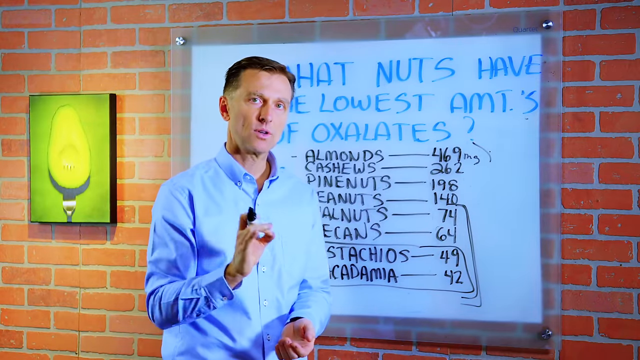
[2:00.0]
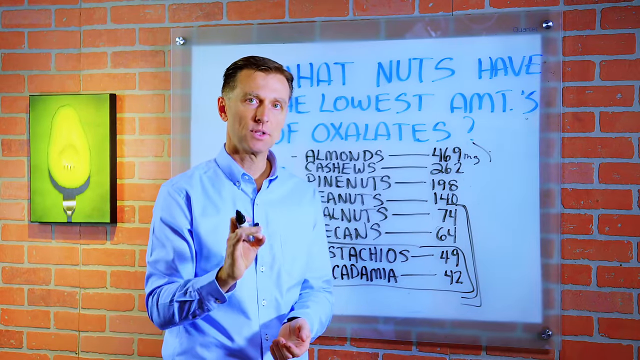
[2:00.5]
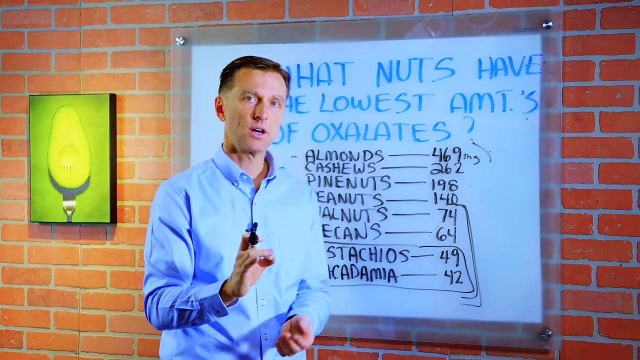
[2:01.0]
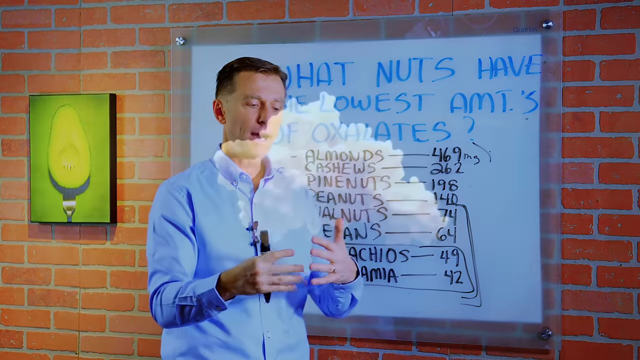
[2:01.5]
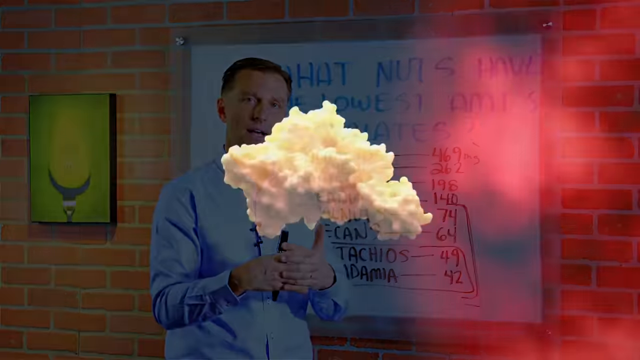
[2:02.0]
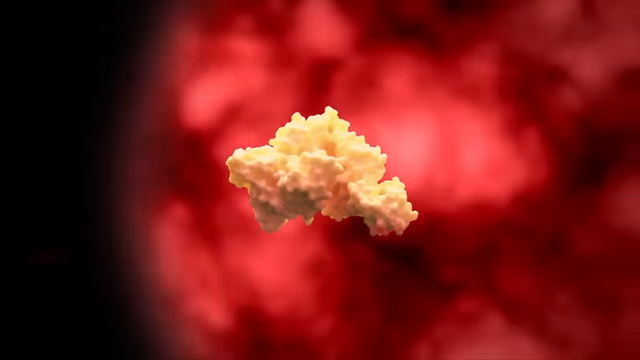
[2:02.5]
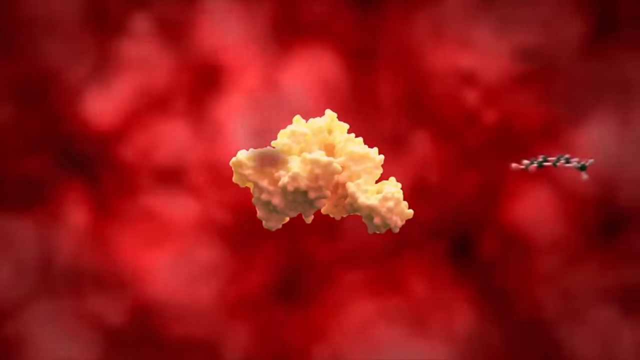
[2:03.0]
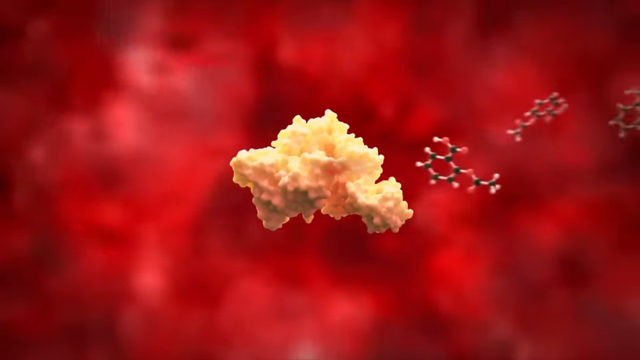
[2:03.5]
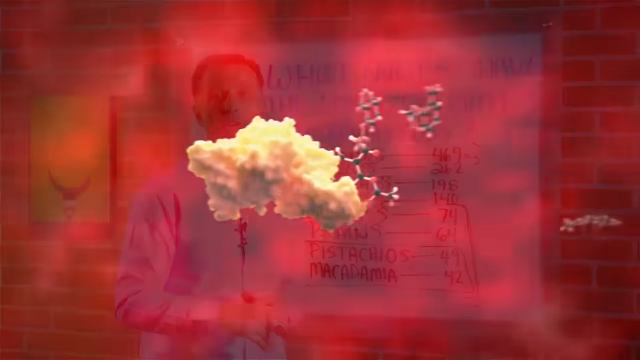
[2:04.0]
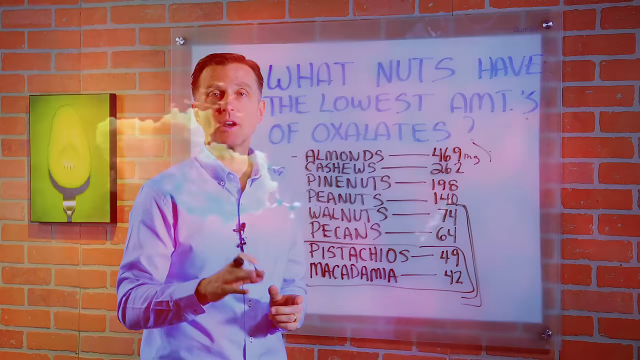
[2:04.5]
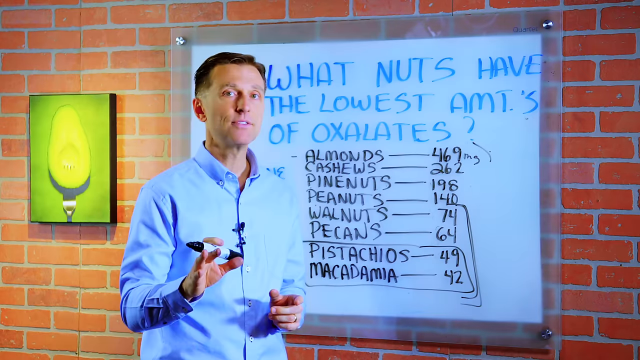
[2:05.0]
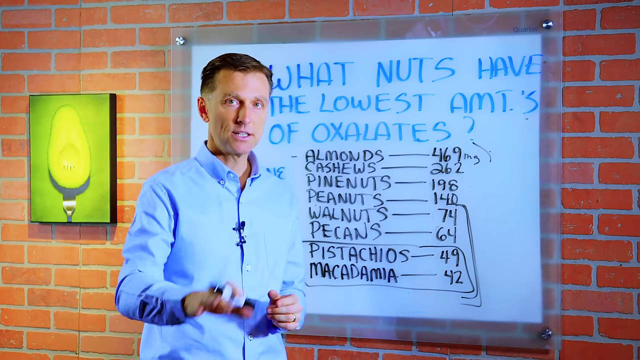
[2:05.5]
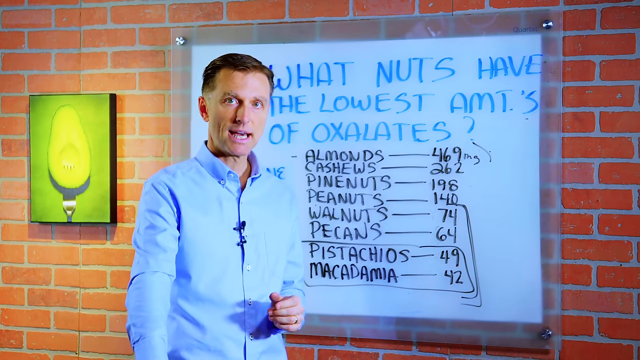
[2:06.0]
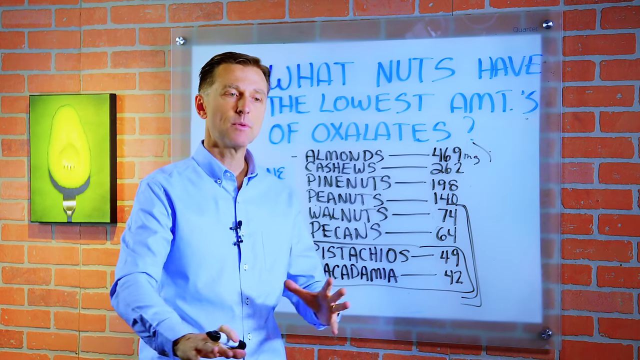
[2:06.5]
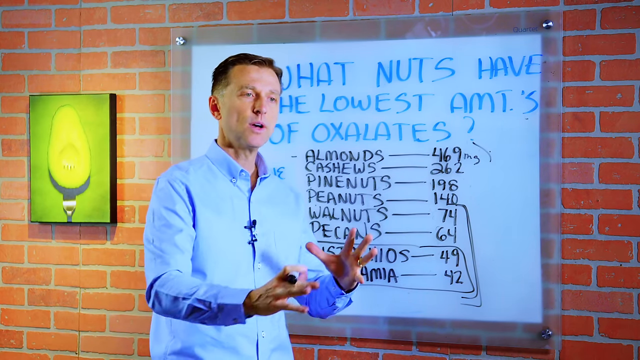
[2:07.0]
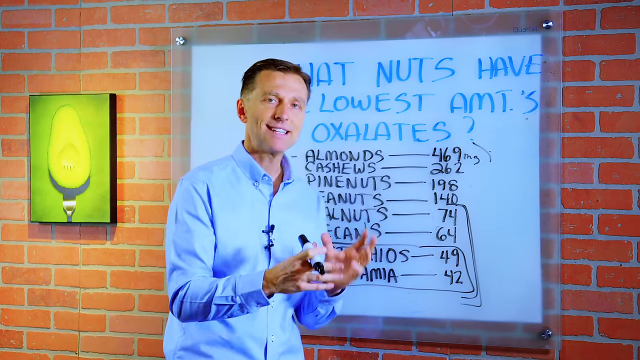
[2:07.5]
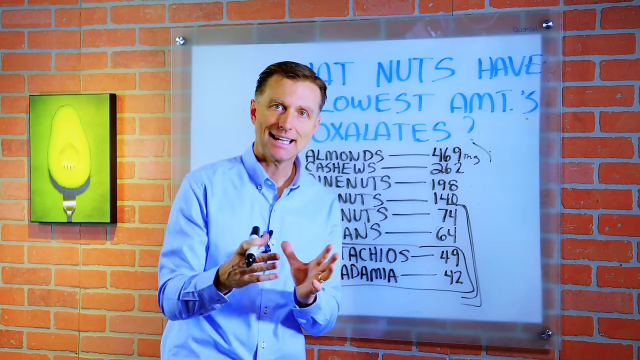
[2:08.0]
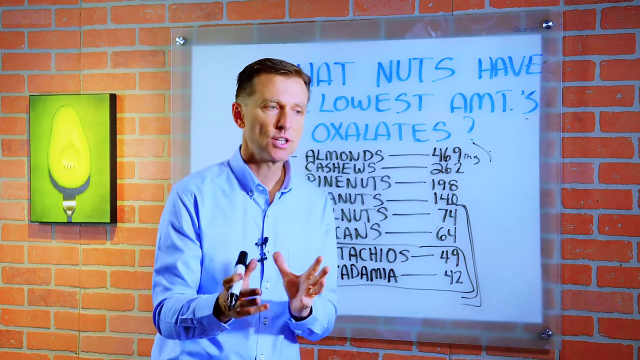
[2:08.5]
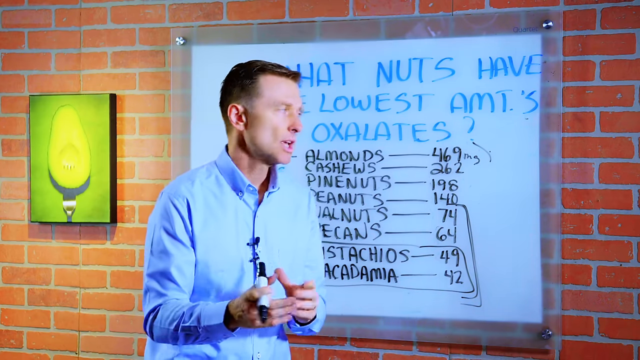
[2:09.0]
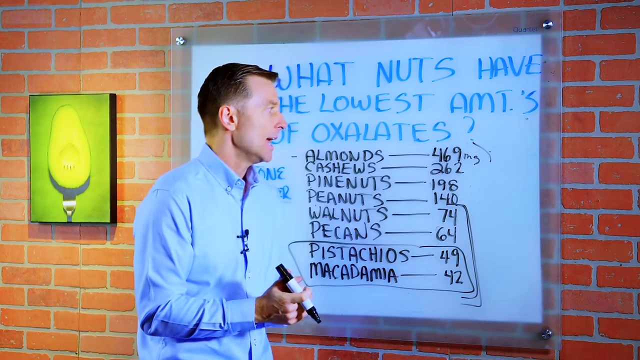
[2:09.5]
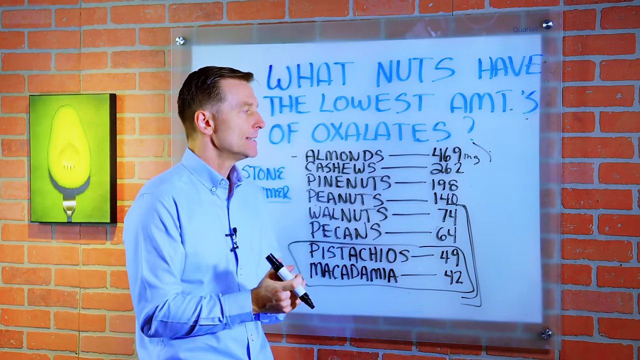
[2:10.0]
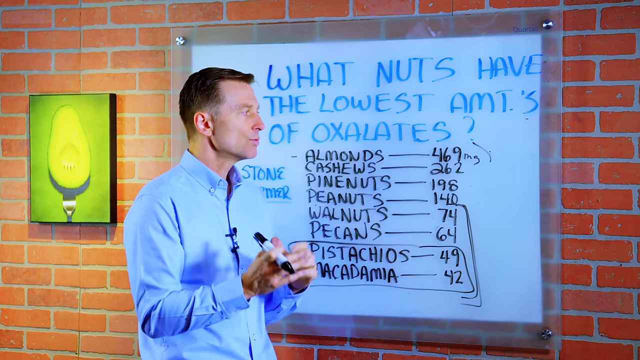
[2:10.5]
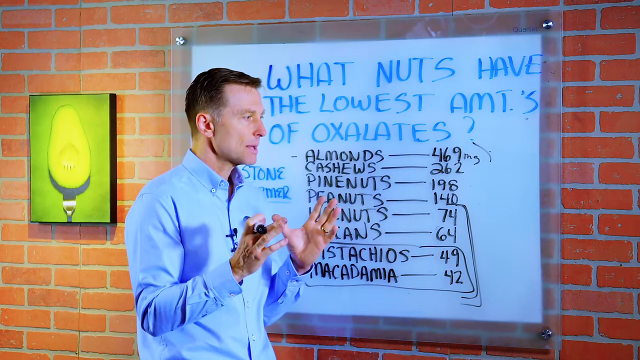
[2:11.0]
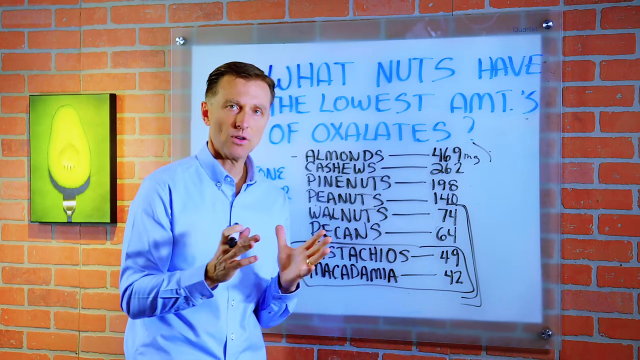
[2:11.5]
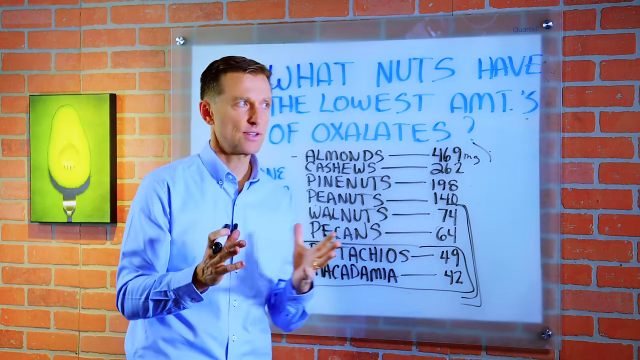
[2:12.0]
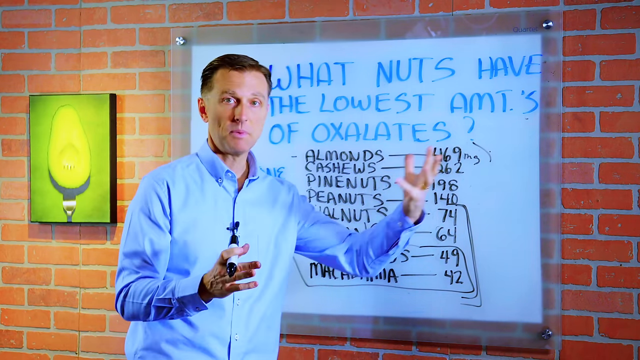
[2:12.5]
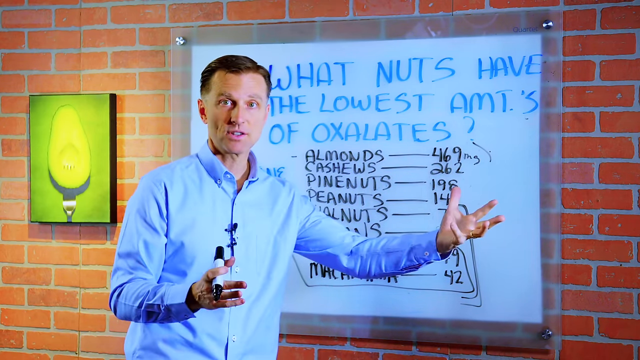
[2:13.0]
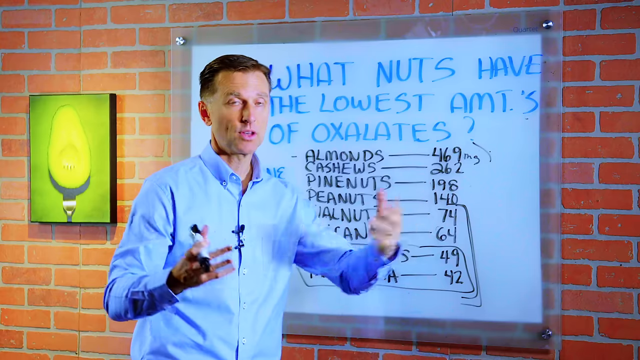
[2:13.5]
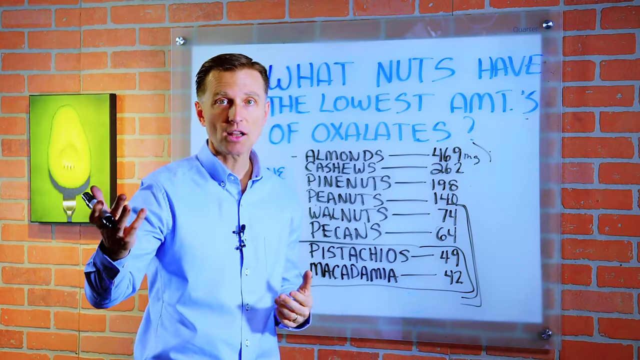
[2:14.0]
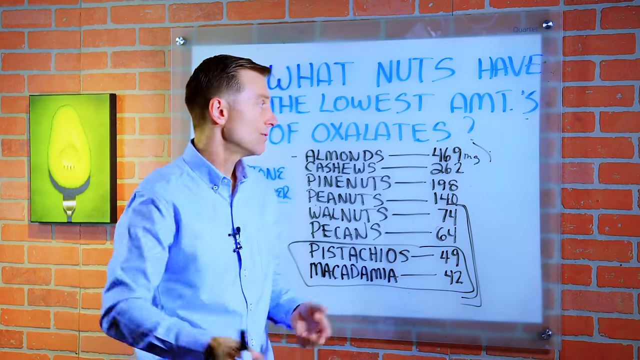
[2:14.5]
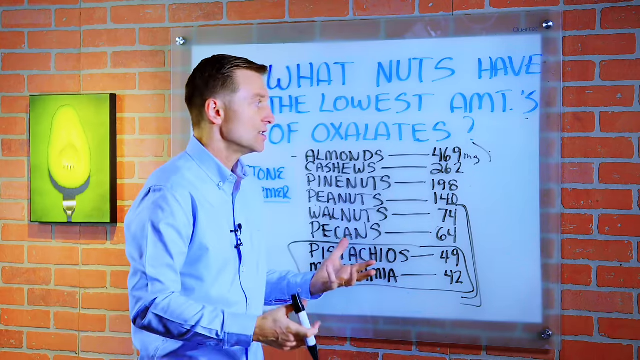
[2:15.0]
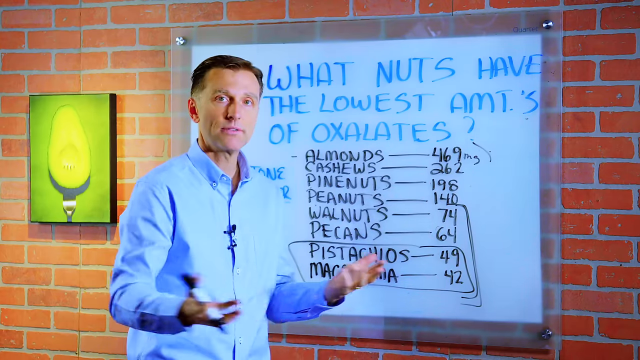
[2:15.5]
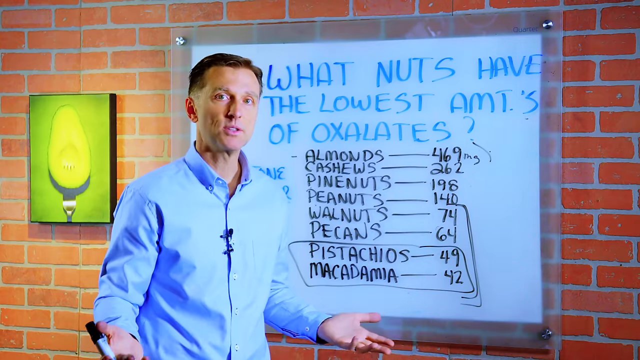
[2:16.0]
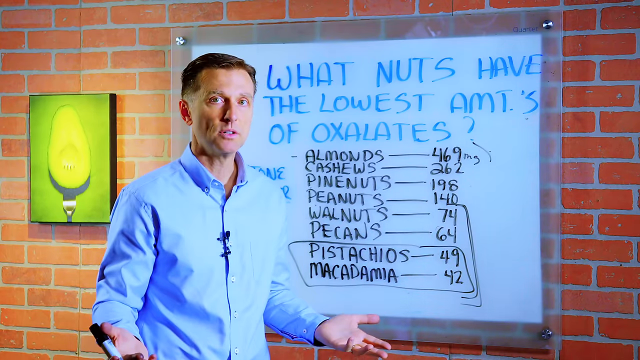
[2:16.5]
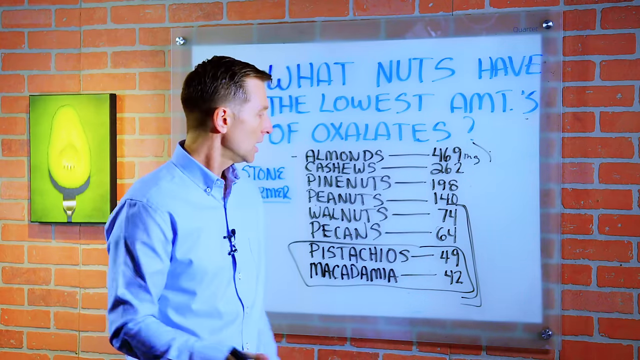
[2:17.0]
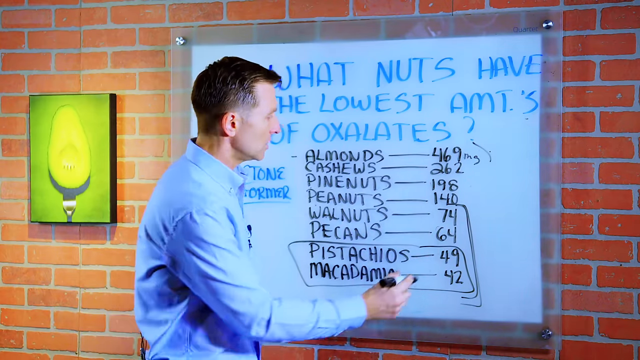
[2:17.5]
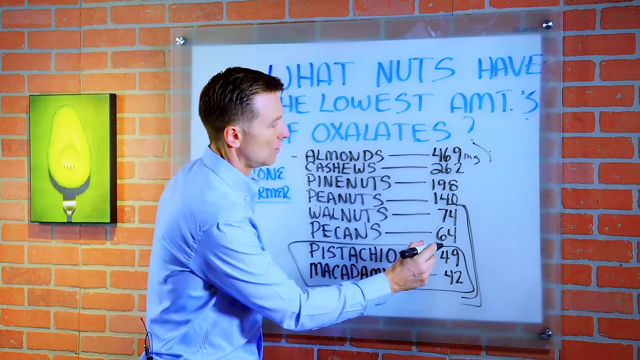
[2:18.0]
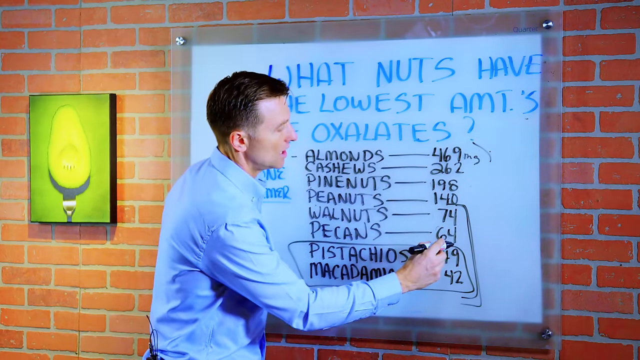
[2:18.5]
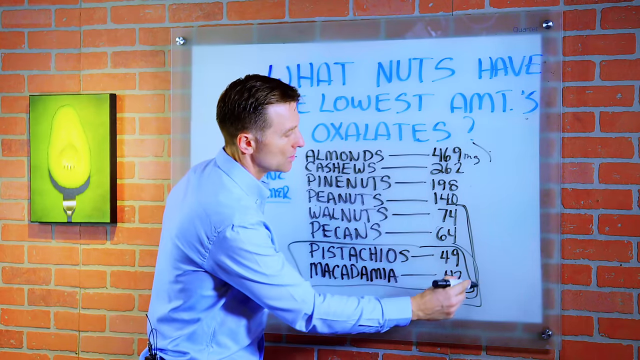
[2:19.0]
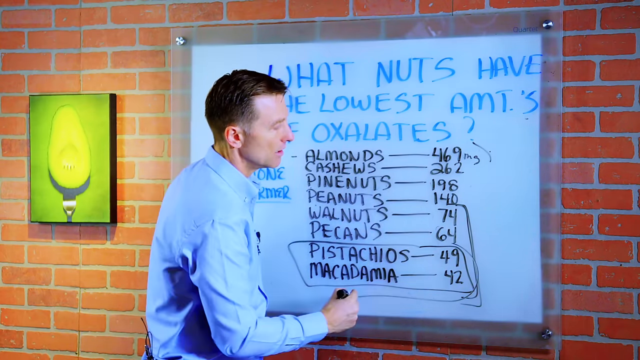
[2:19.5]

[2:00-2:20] The doctor continues with the list of eight different types of nuts. Fresh-squeezed orange juice and a potassium supplement have been introduced, and an image of an avocado hangs on the wall behind him.